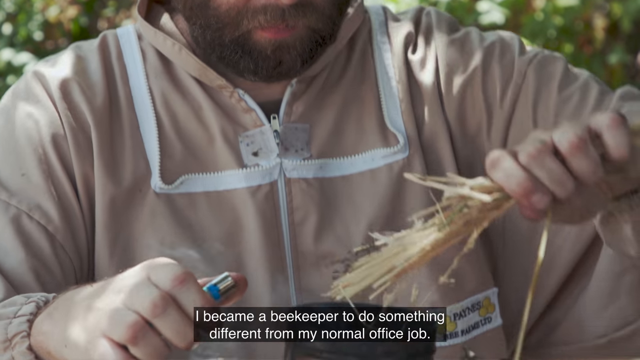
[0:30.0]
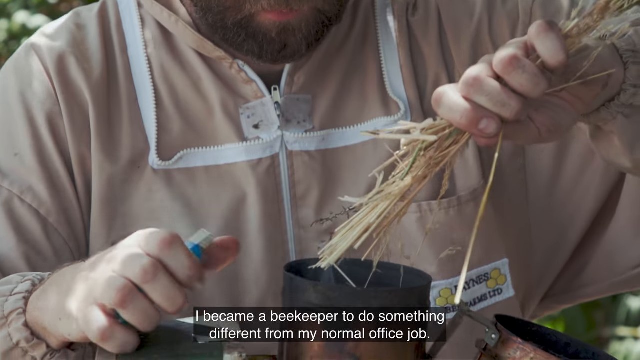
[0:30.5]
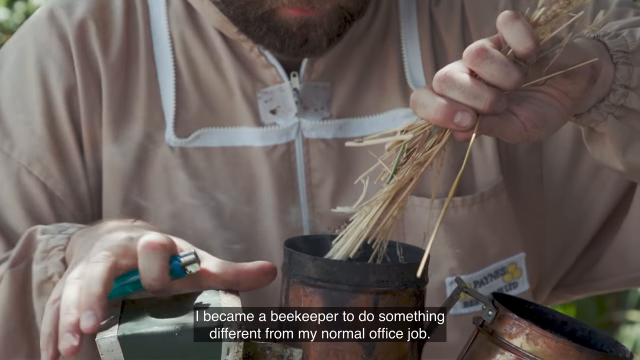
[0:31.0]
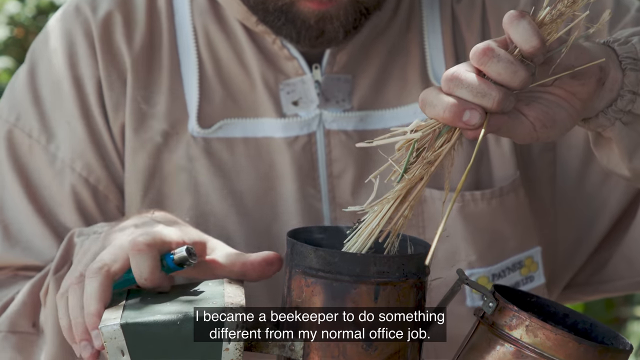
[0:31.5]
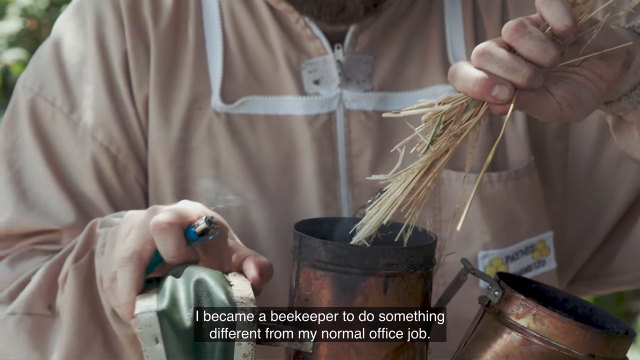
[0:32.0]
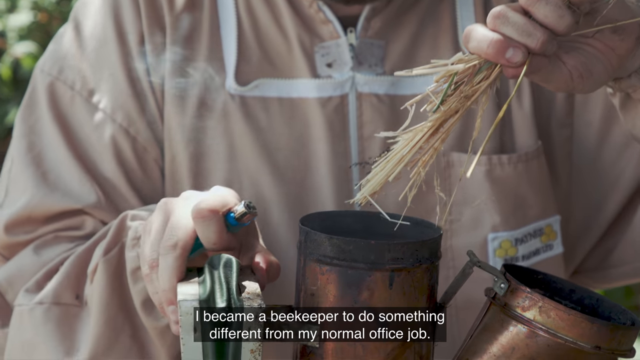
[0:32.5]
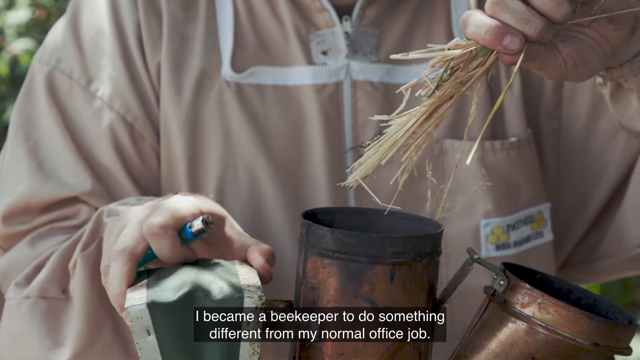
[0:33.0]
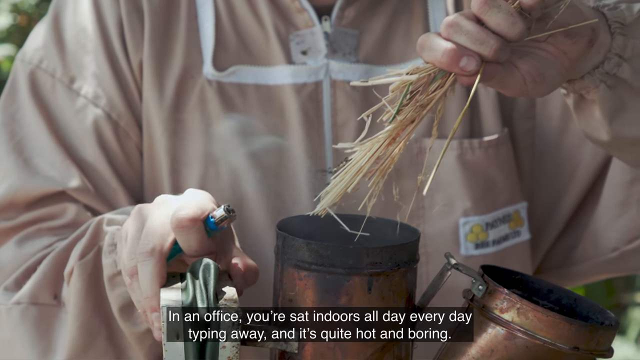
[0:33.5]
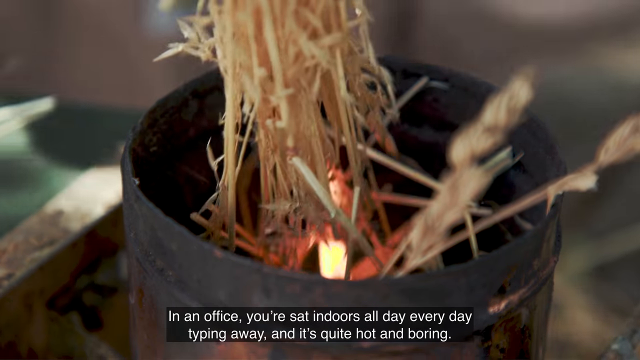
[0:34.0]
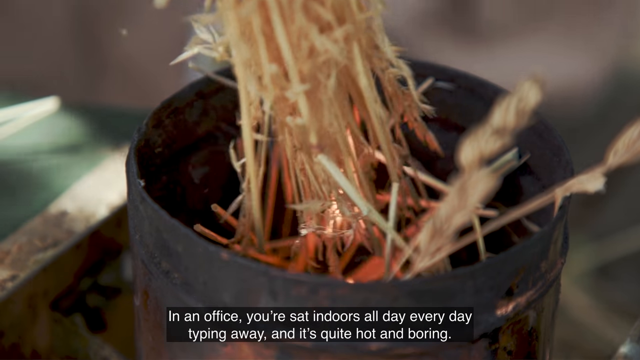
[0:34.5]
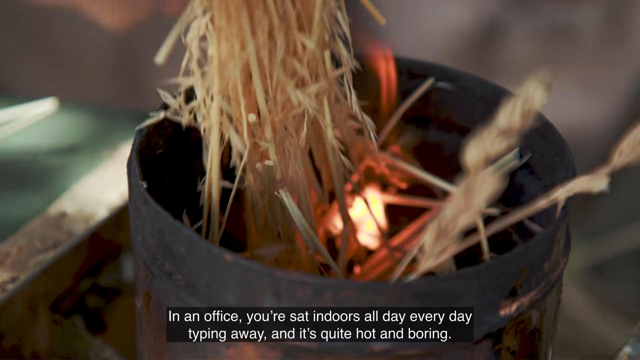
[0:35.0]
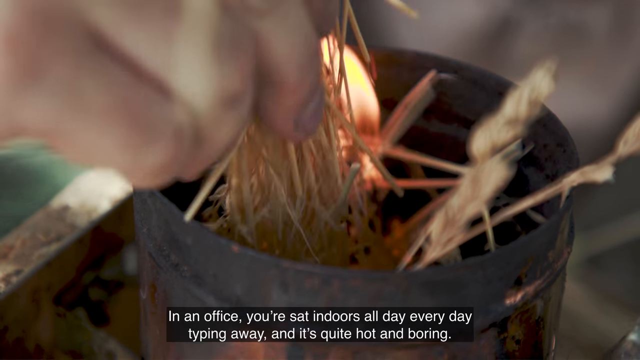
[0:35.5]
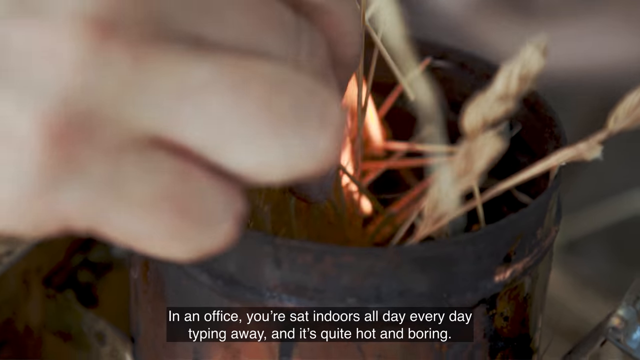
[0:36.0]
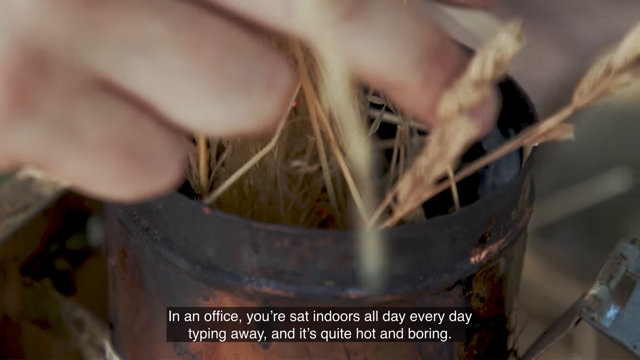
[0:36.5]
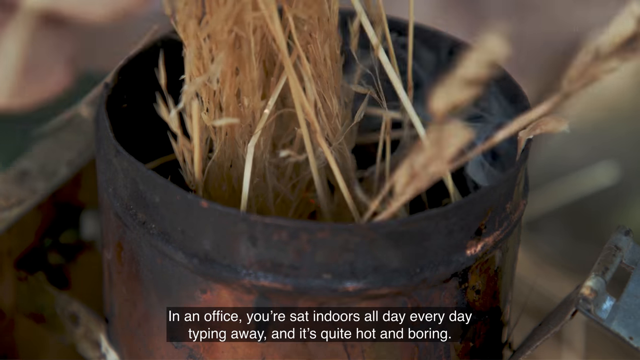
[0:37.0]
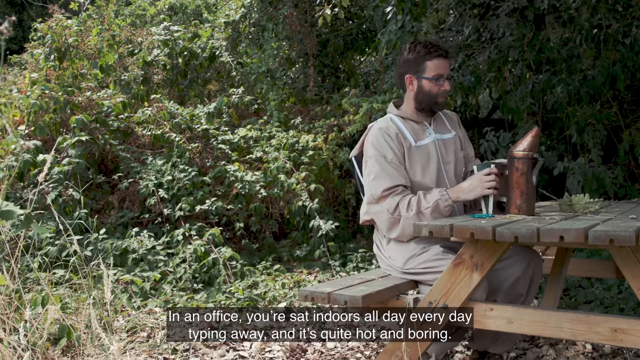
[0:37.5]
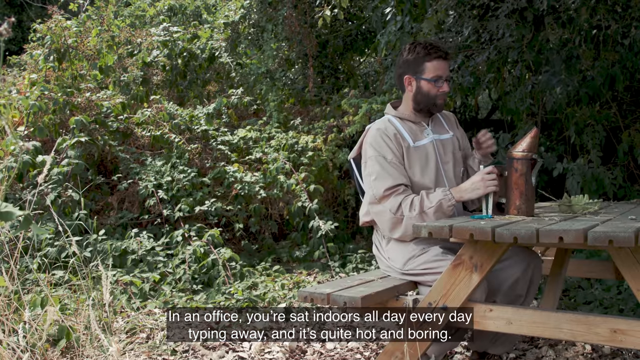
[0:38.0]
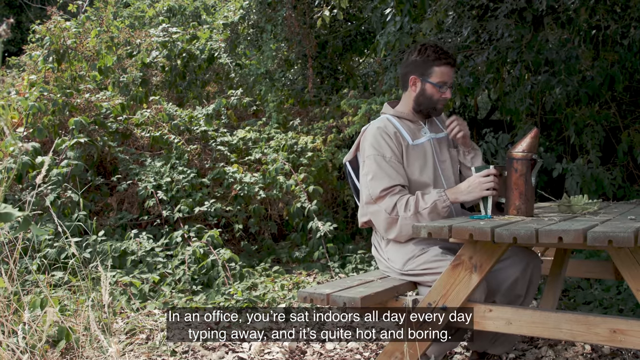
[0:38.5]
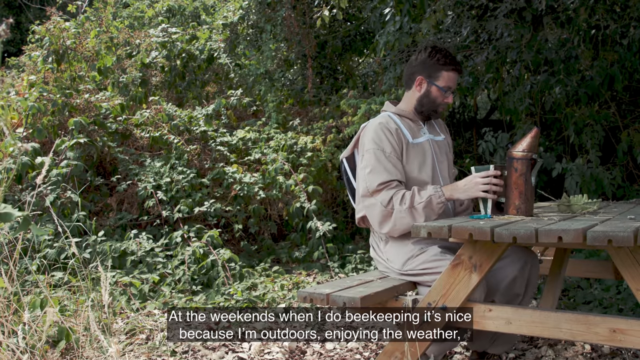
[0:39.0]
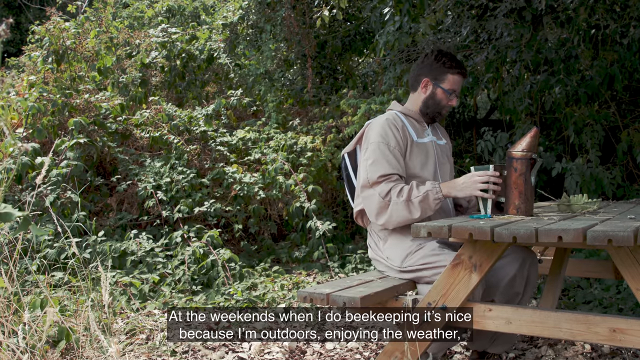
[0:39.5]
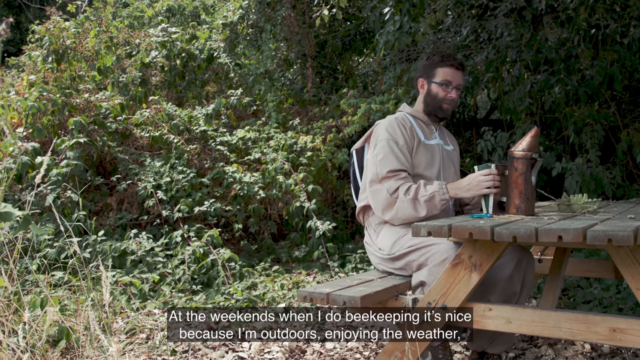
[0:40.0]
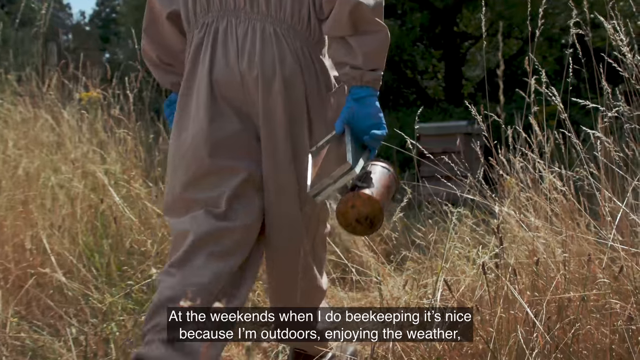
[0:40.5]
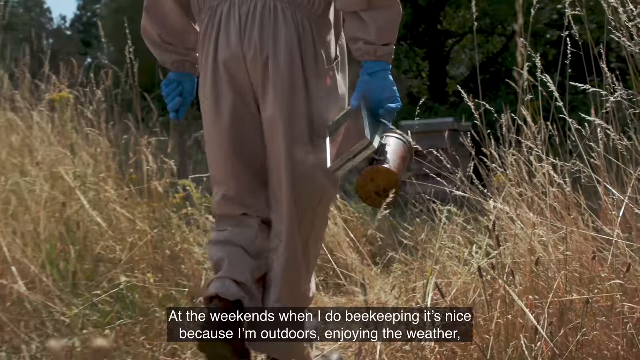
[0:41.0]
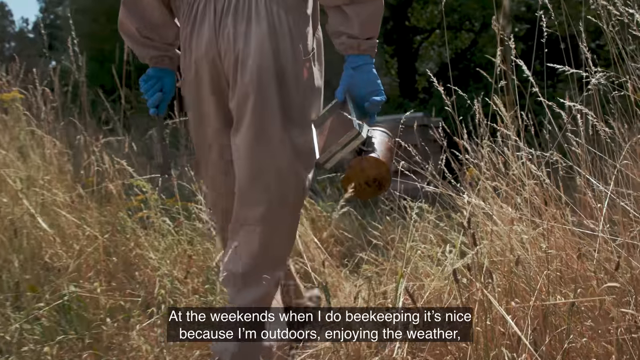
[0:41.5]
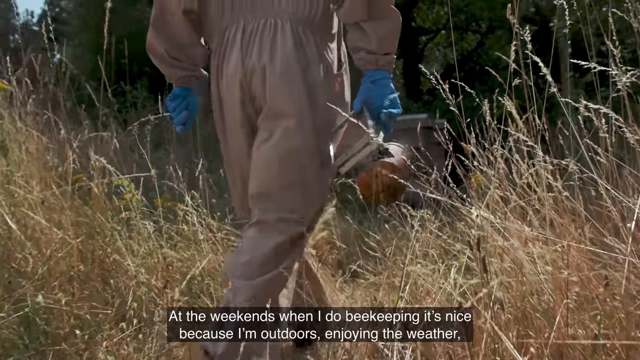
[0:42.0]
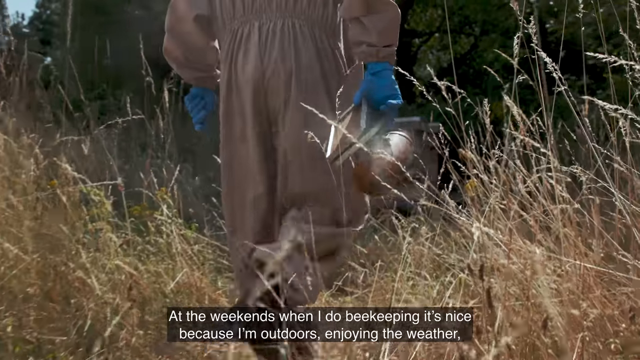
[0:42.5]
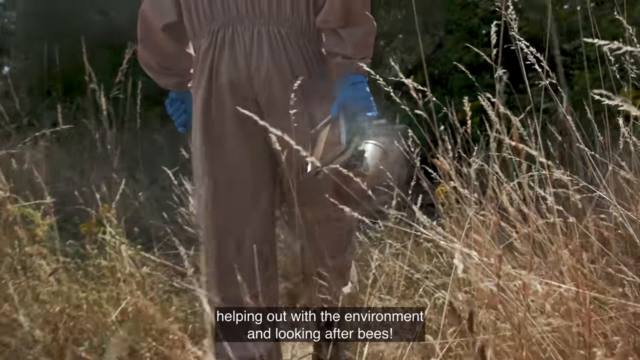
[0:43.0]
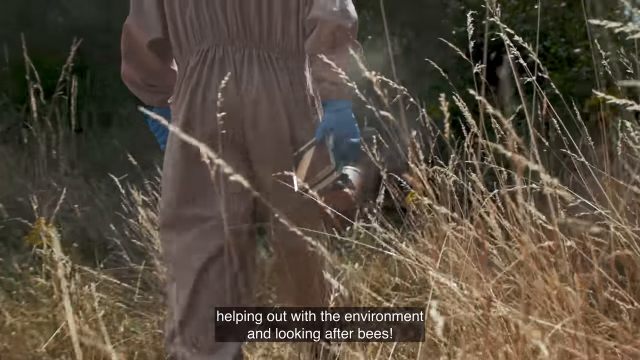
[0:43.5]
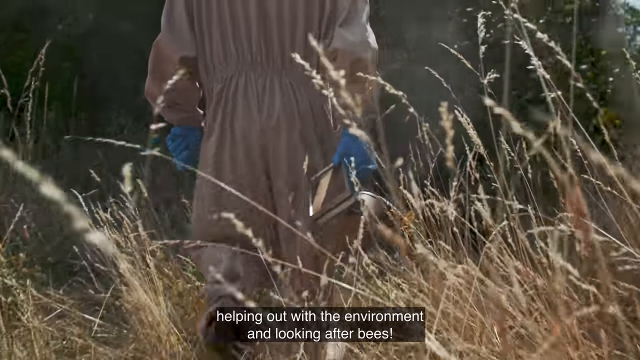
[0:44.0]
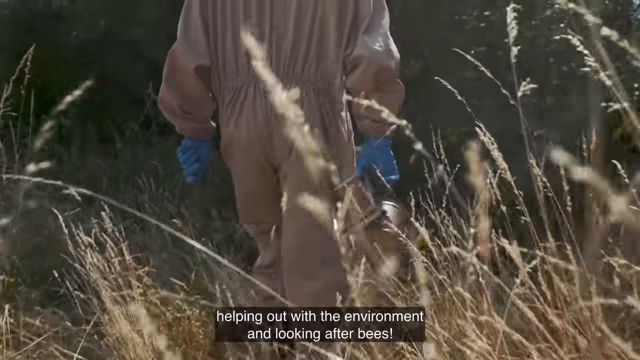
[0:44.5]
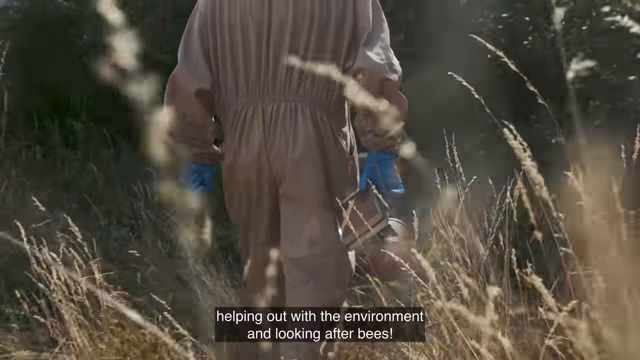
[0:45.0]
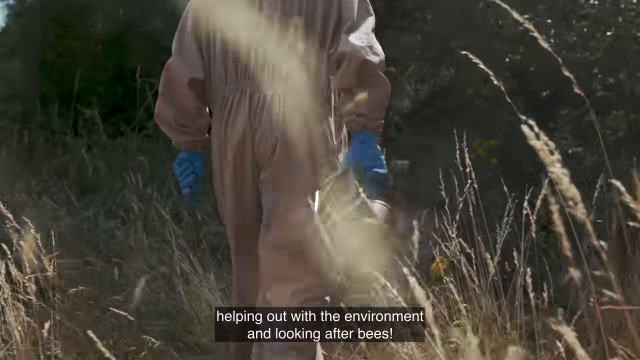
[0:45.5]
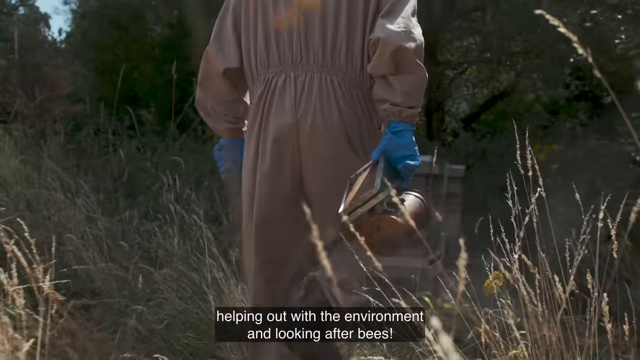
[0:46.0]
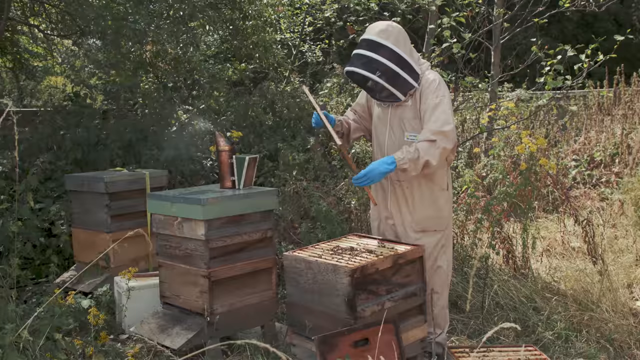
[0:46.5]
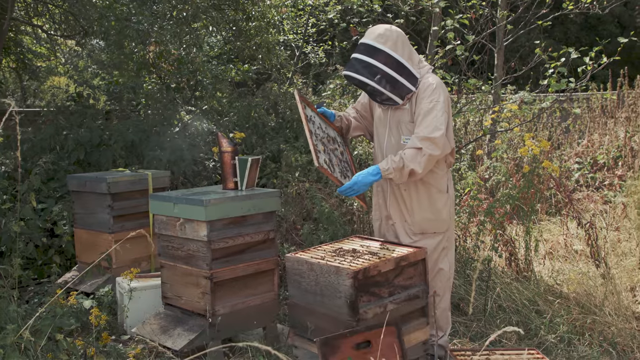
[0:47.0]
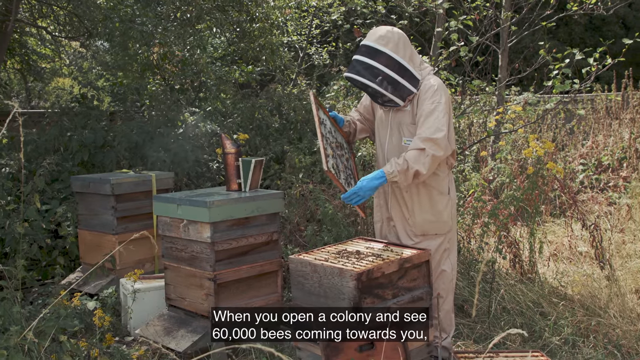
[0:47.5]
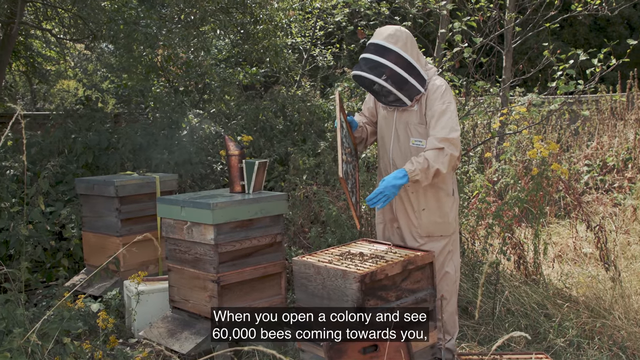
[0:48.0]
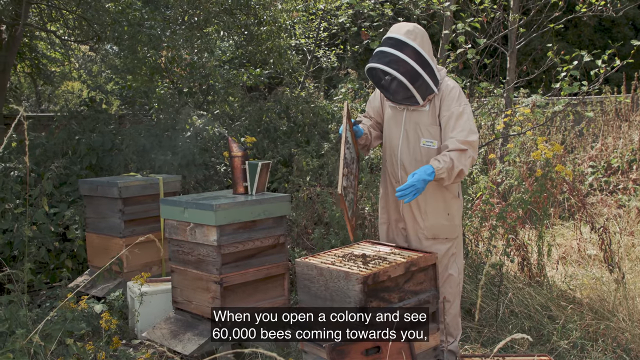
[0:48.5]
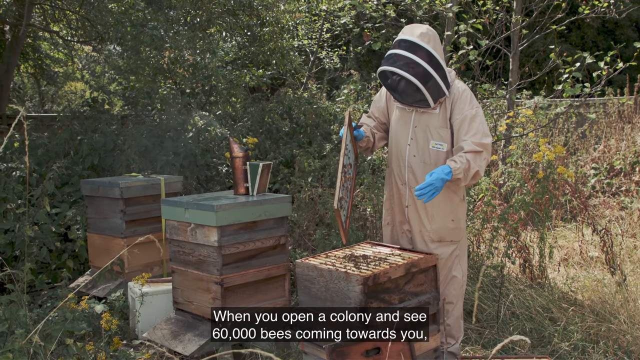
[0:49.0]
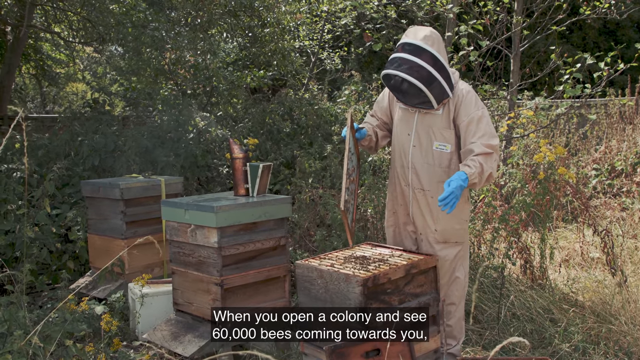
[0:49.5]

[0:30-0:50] Llyr Jones wears protective gear against bee stings. He burns some grass inside a metal object, and smoke comes out of it. He does not seem very old, perhaps 30 to 40 years of age. While carrying the metal object, he wears something blue on his hands. He puts the burning grass inside it to produce a lot of smoke.